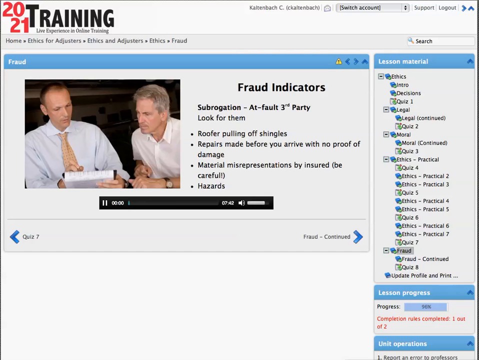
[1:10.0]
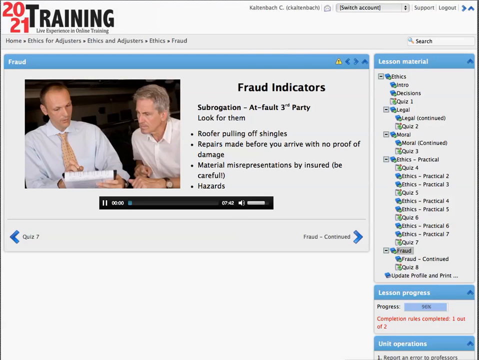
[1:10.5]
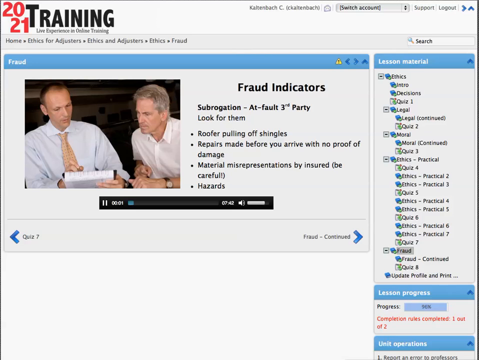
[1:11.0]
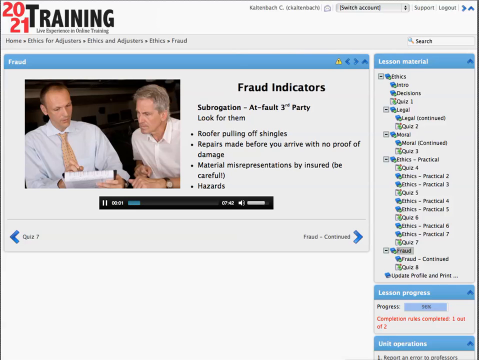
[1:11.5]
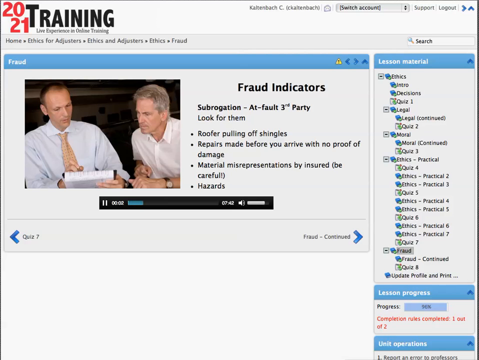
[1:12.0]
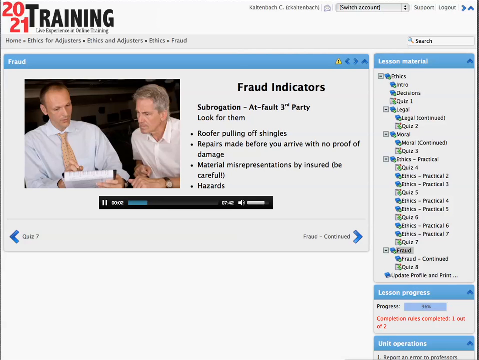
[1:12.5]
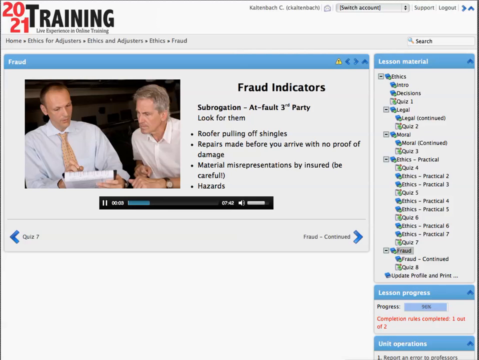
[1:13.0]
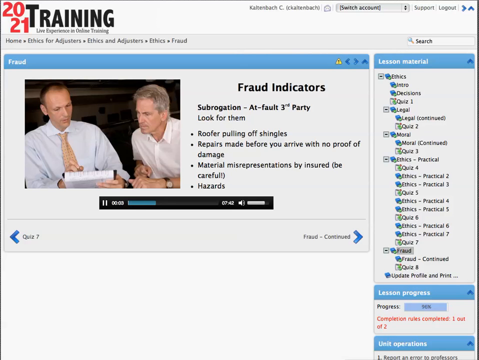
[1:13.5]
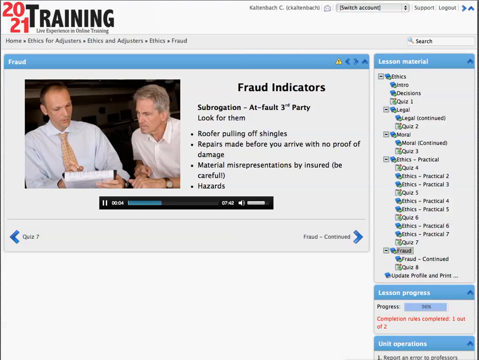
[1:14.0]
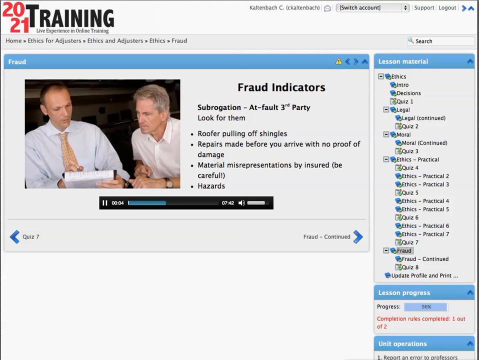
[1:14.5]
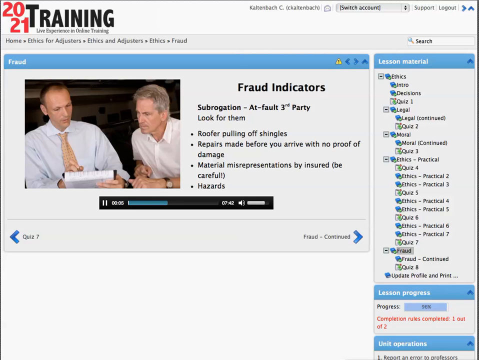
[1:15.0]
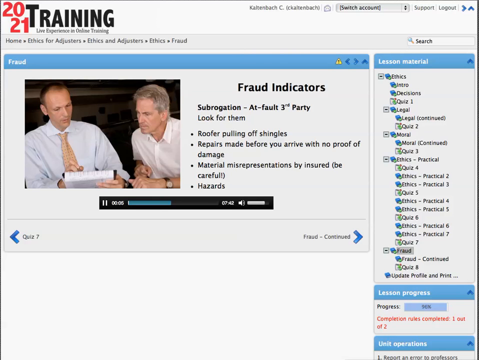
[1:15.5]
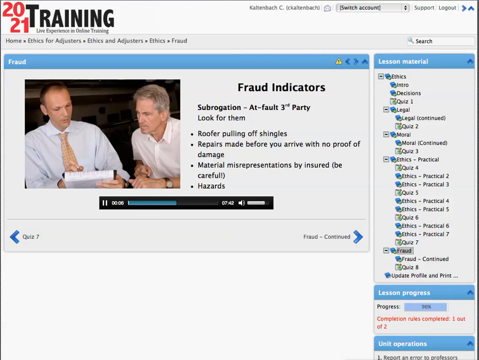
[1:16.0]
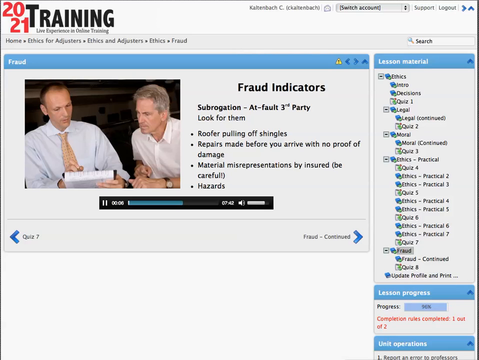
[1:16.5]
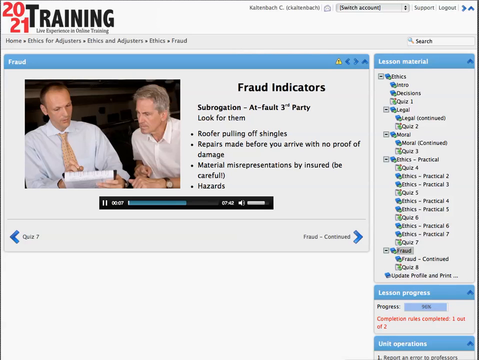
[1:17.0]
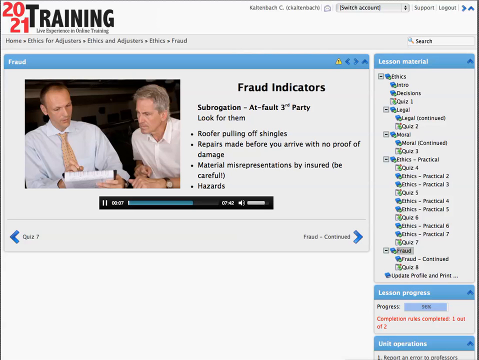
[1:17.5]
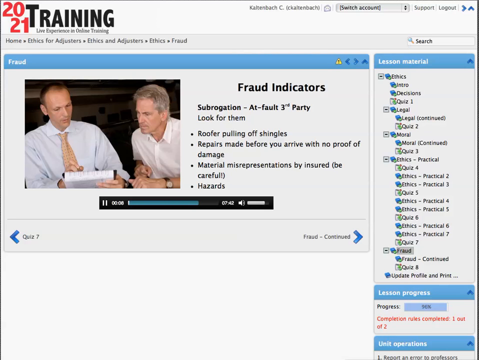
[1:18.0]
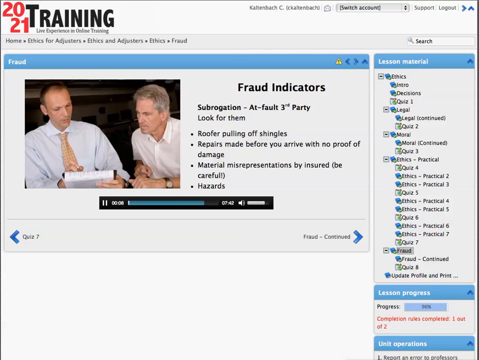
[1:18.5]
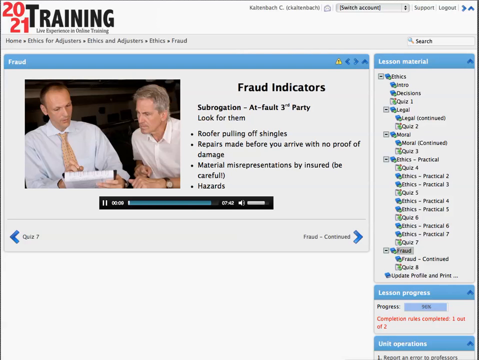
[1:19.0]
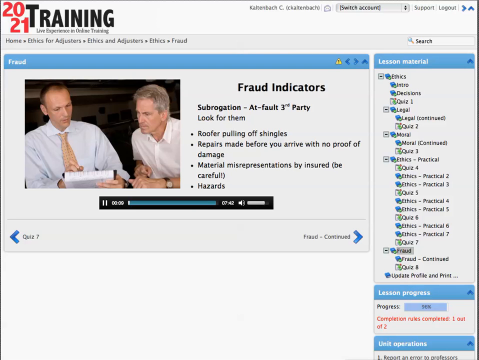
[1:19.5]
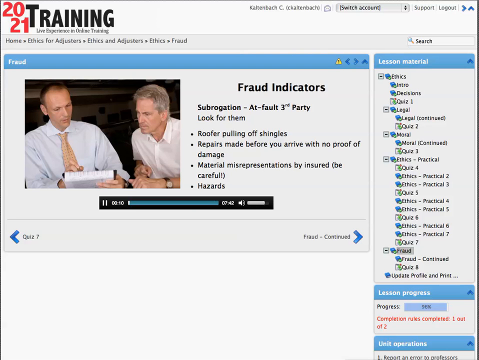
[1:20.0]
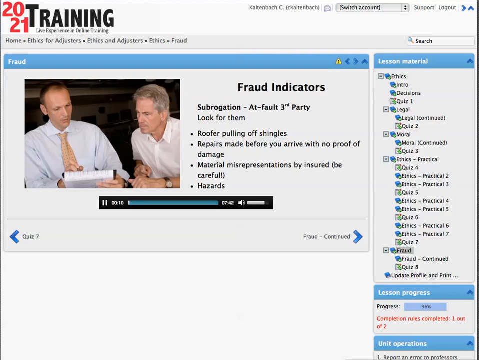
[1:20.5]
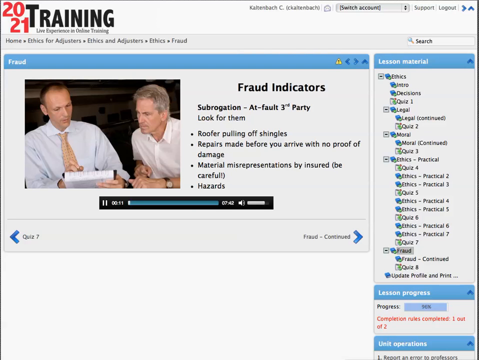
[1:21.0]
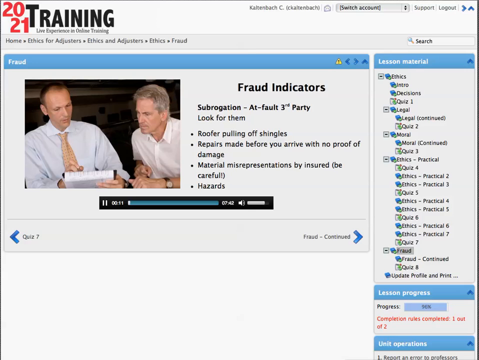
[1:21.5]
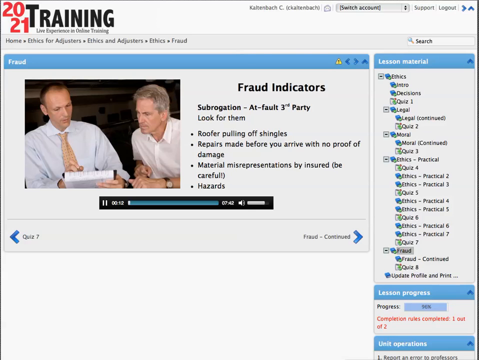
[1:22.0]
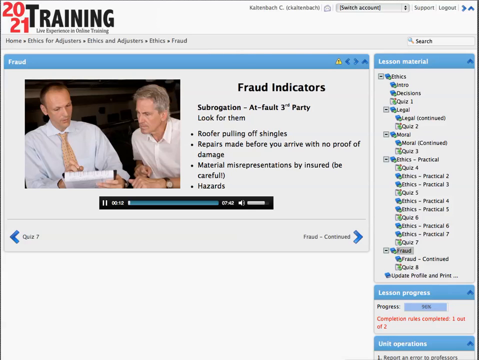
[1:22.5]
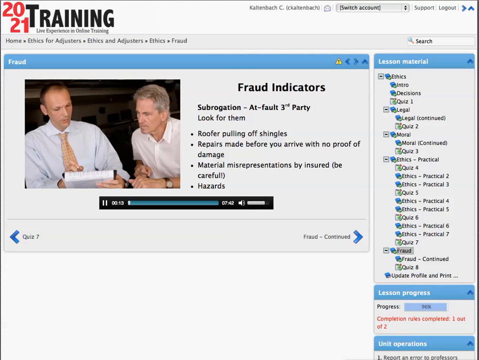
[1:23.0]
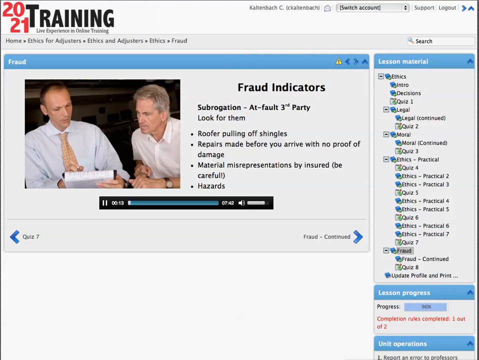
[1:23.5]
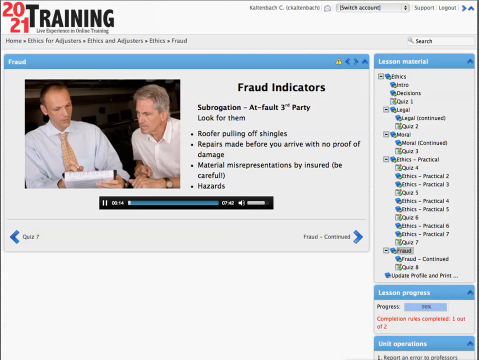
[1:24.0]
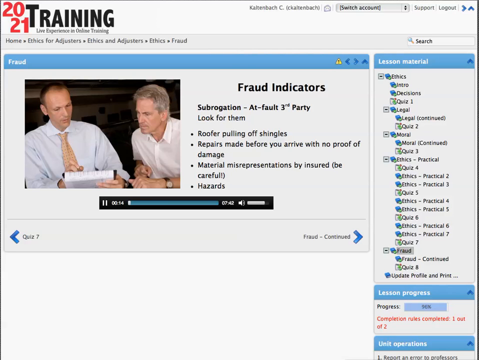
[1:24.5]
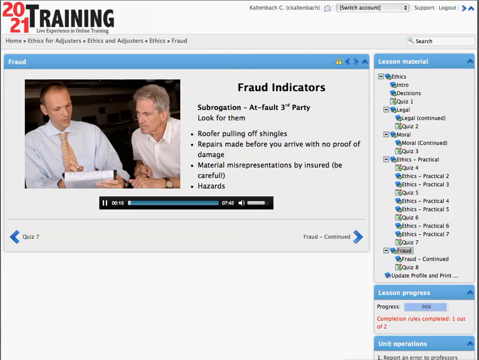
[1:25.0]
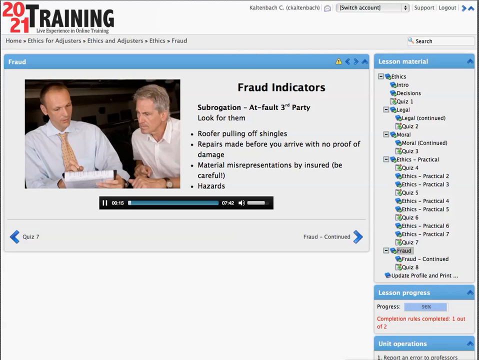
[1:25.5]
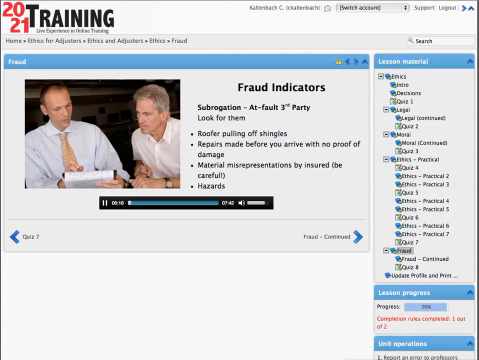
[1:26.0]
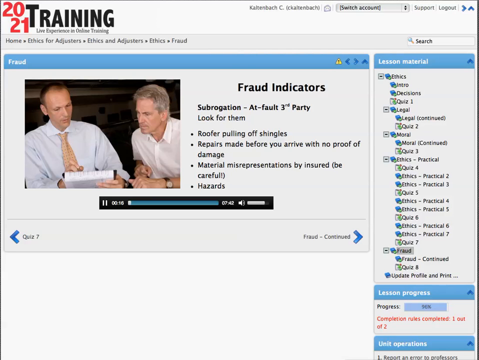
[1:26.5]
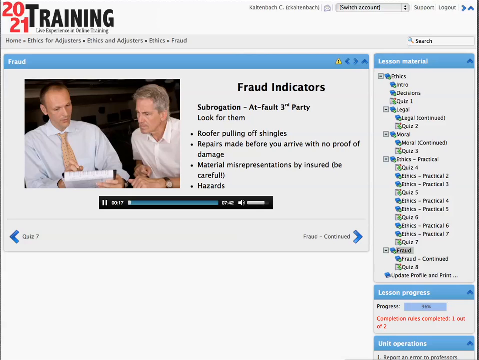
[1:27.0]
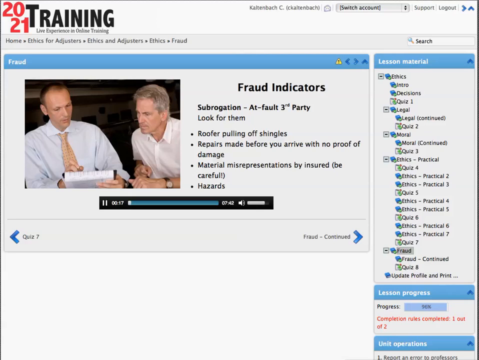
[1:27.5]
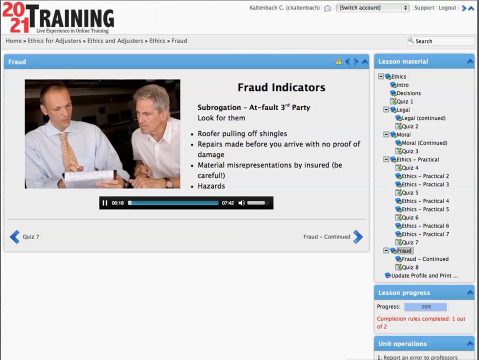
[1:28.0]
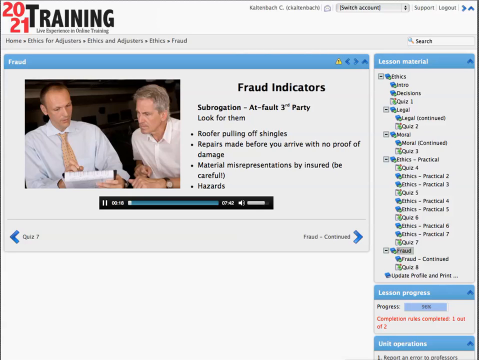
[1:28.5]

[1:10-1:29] The cursor clicks on "Fraud", which is under lesson material, and another screen appears with the title "fraud indicators". A subheading reads "subrogation - at fault third party", and below it the text says "look for them". Below that are four bullet points: "roofer pulling off shingles", "repairs made before you arrive with no proof of damage", "material misrepresentations" with "(be careful)", and "hazards". An audio recording at the bottom is 7 minutes and 42 seconds long. On the left-hand side there is a picture of two men. The man on the right looks to be in his late 40s and wears a light short-sleeved shirt and a wristwatch. Beside him is a man who looks to be in his late 30s, wearing a white long-sleeved shirt and a tie; he holds some papers and appears to be presenting something to the older man.